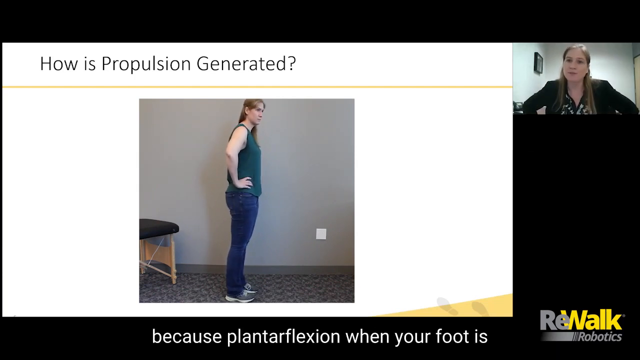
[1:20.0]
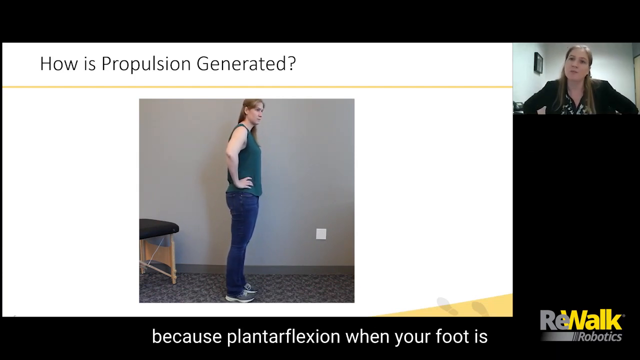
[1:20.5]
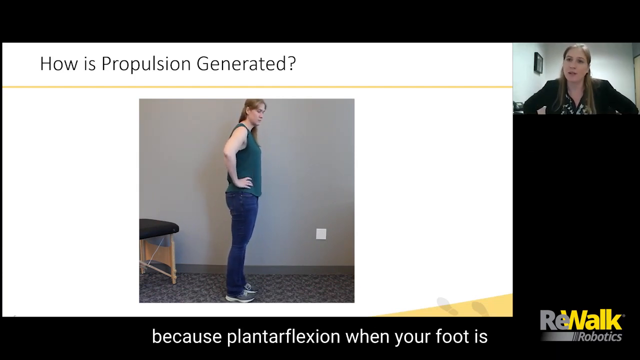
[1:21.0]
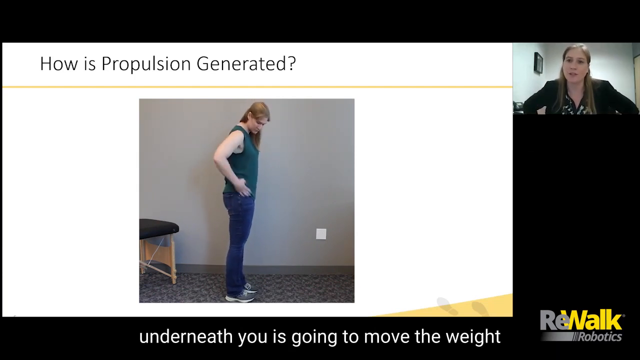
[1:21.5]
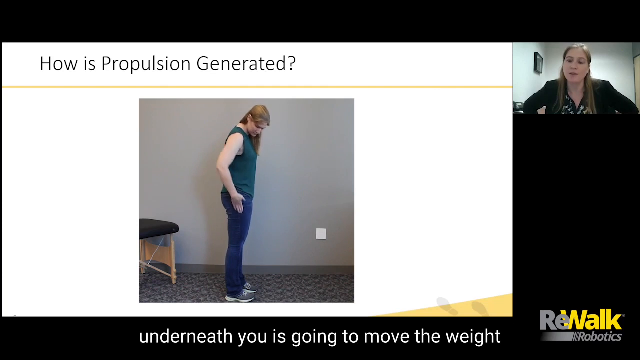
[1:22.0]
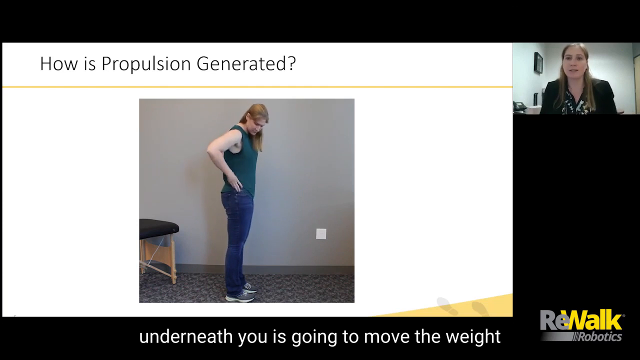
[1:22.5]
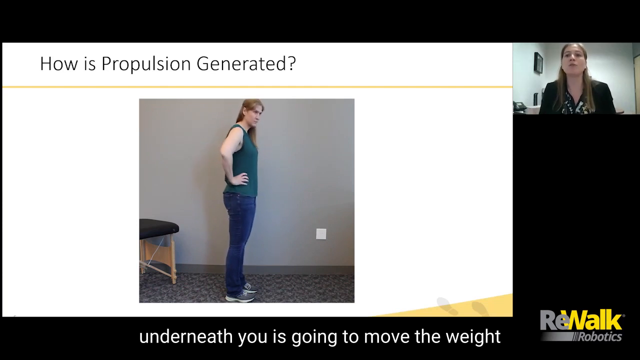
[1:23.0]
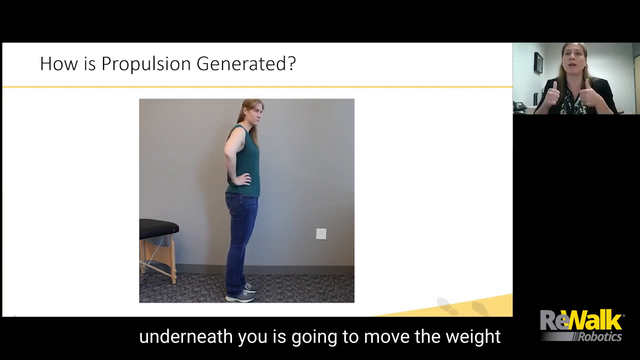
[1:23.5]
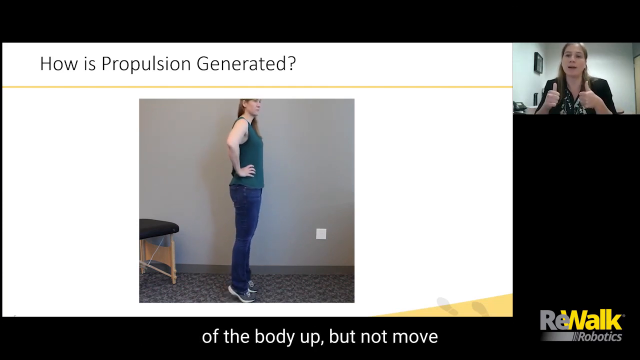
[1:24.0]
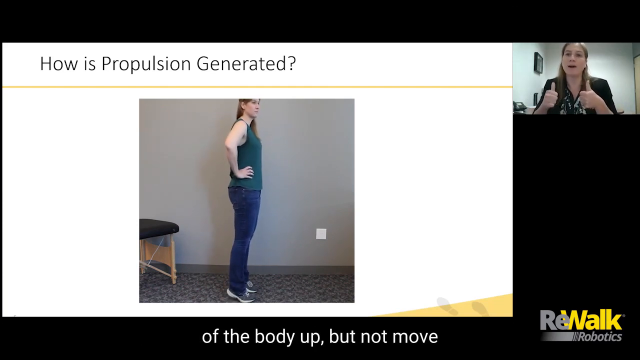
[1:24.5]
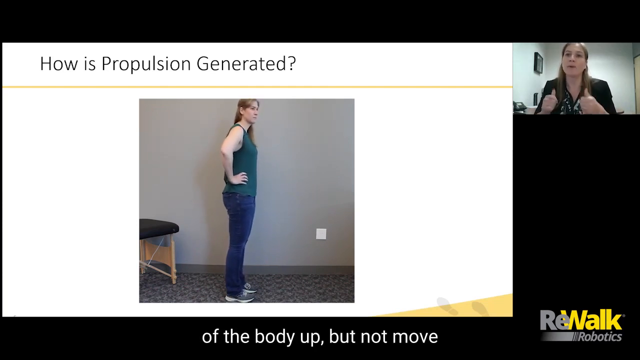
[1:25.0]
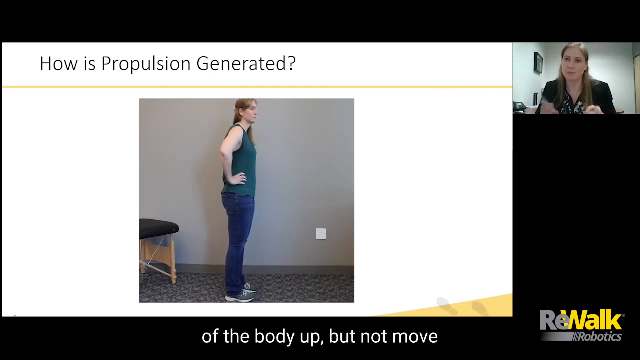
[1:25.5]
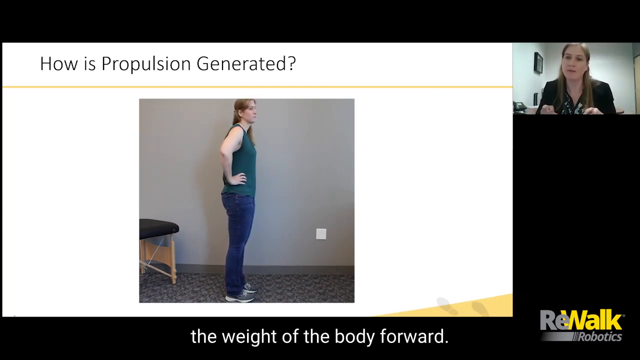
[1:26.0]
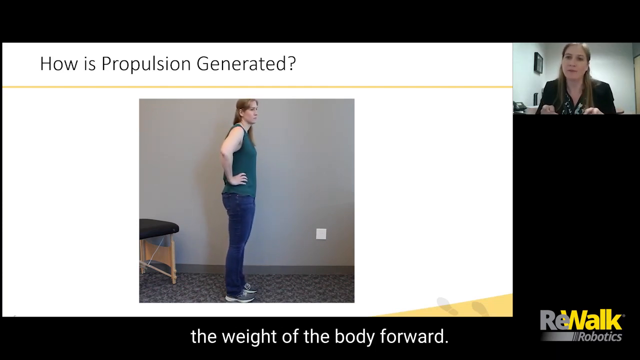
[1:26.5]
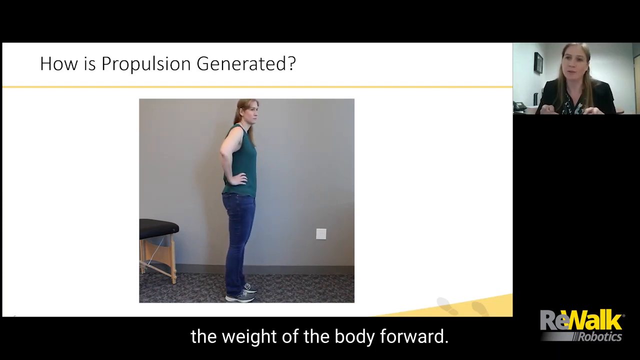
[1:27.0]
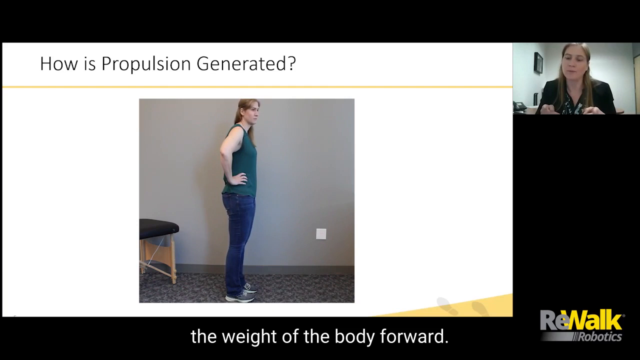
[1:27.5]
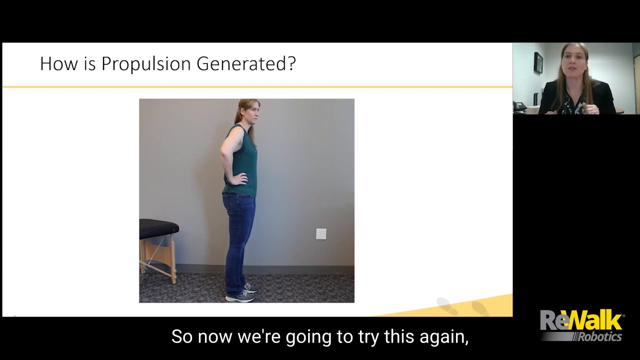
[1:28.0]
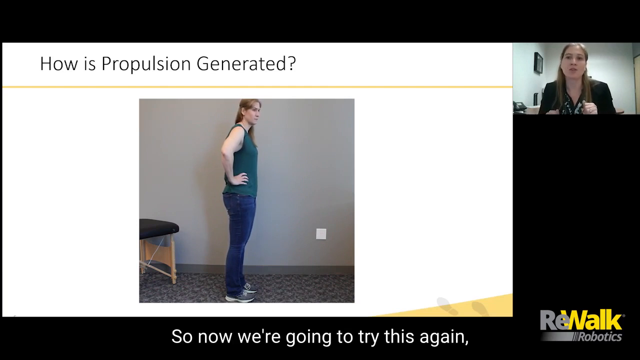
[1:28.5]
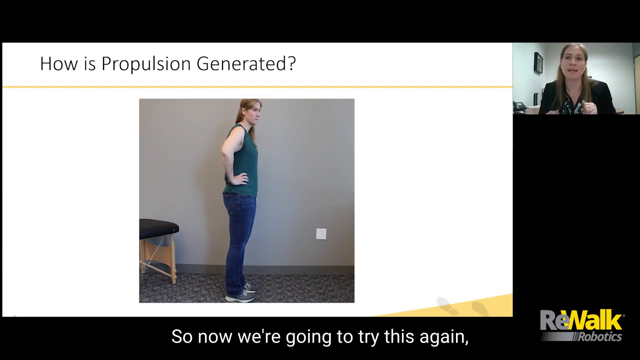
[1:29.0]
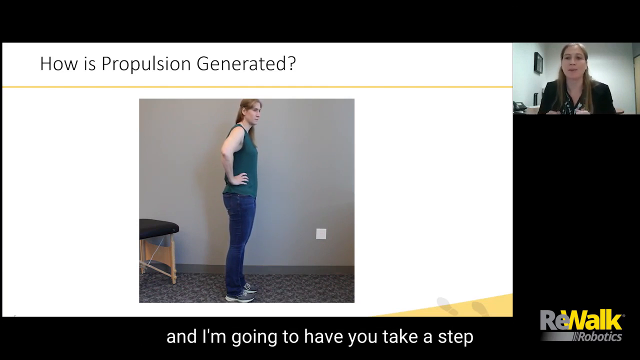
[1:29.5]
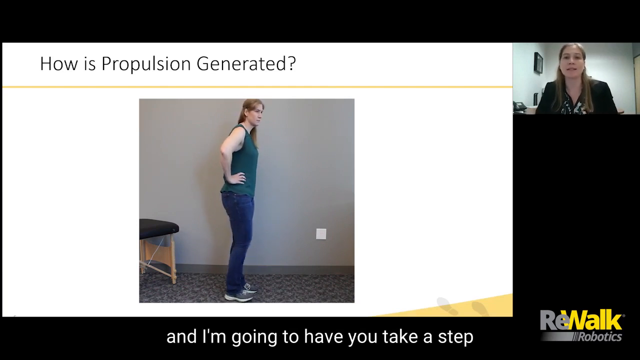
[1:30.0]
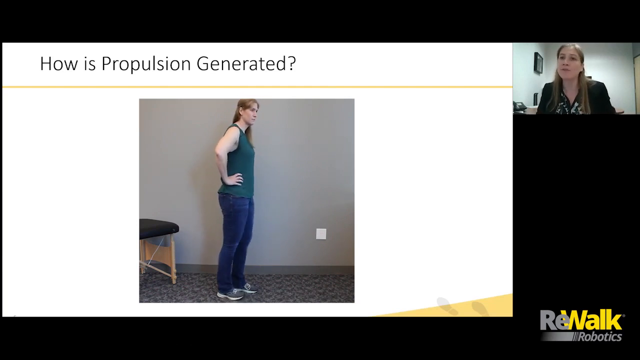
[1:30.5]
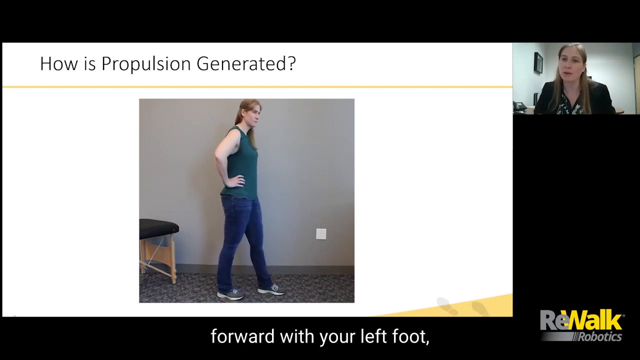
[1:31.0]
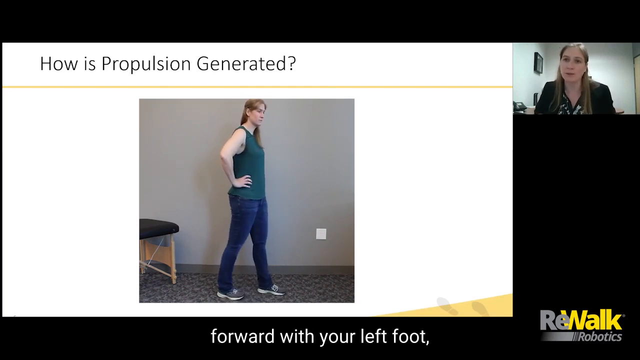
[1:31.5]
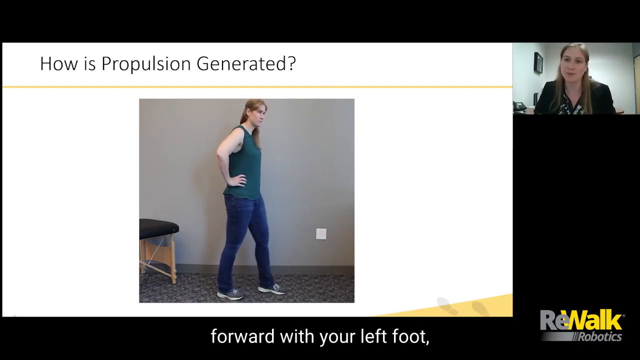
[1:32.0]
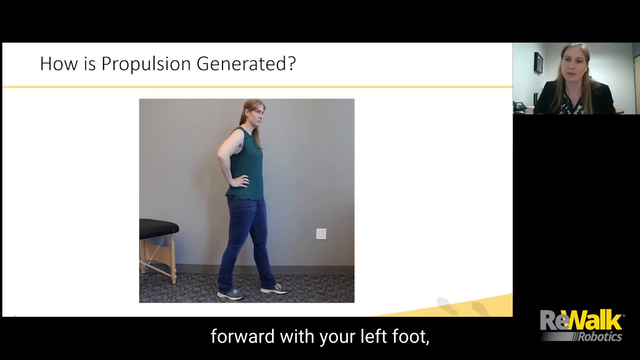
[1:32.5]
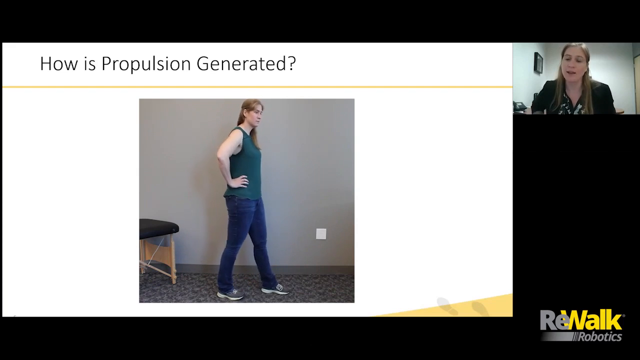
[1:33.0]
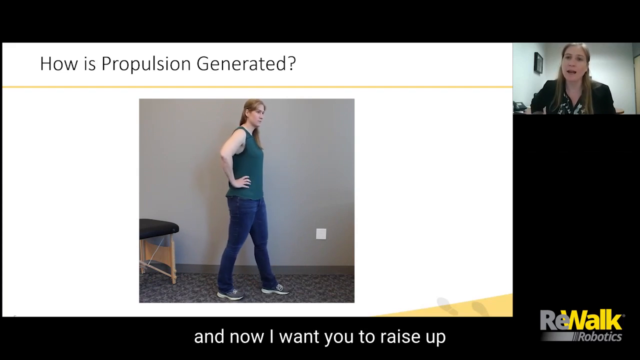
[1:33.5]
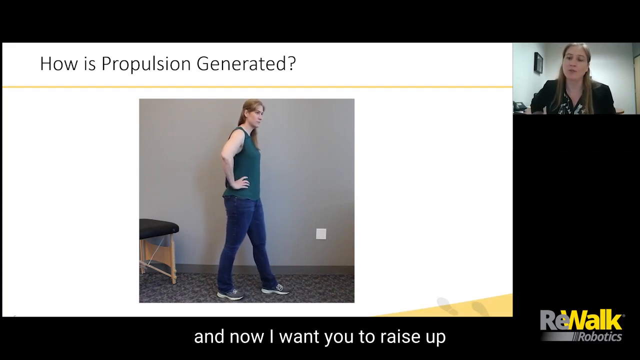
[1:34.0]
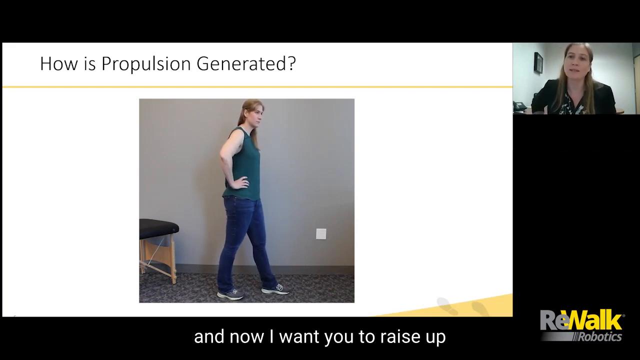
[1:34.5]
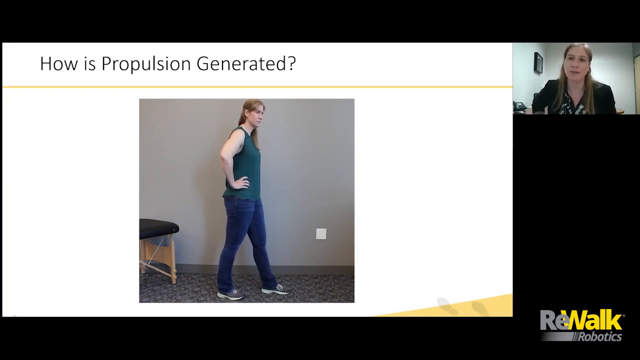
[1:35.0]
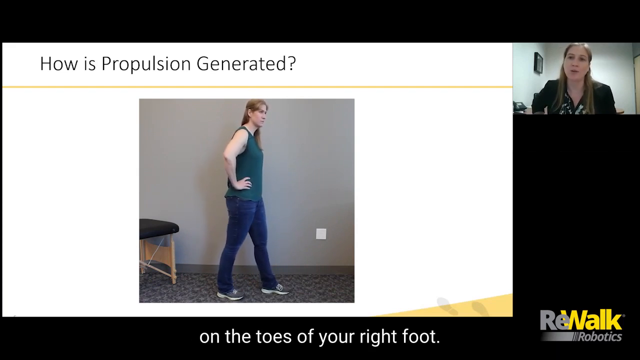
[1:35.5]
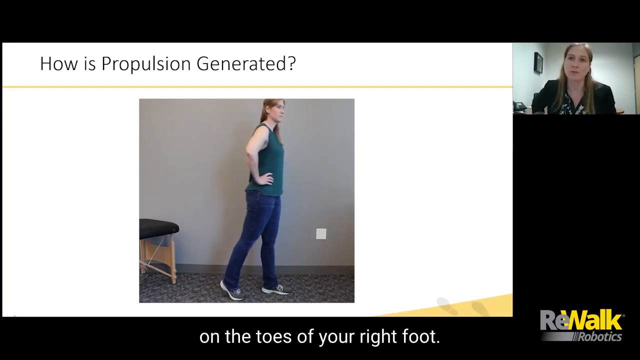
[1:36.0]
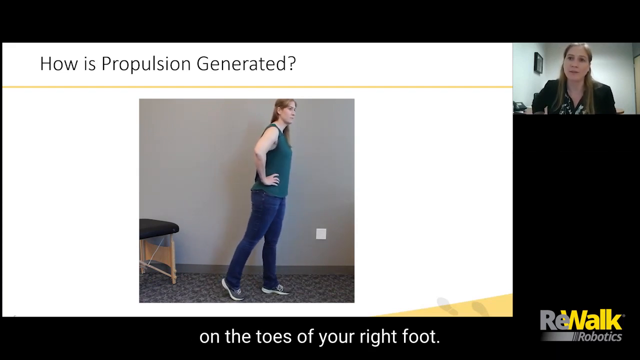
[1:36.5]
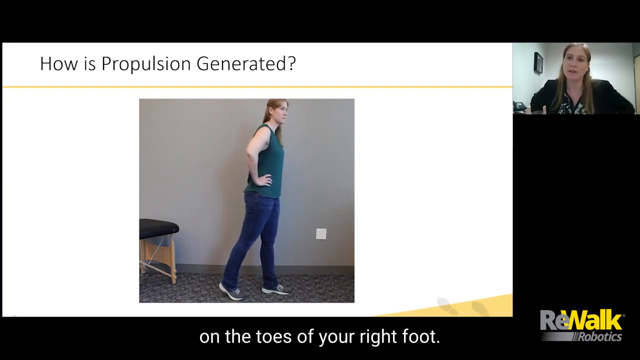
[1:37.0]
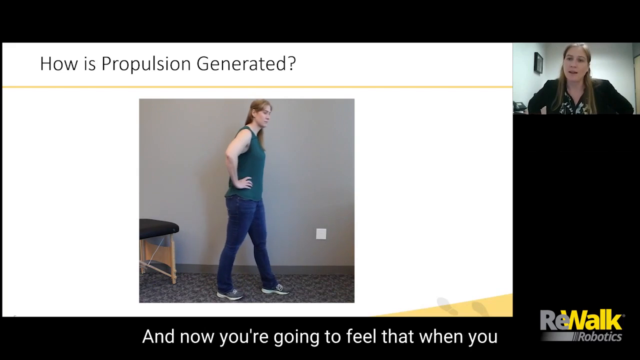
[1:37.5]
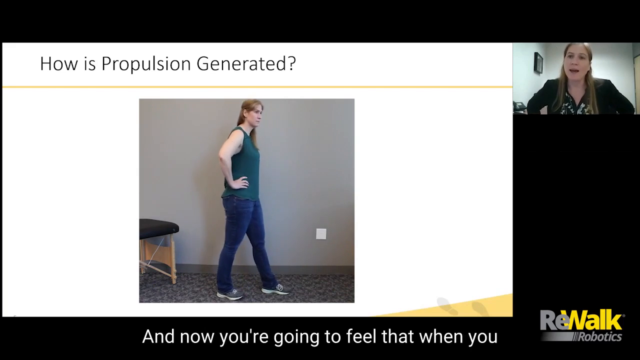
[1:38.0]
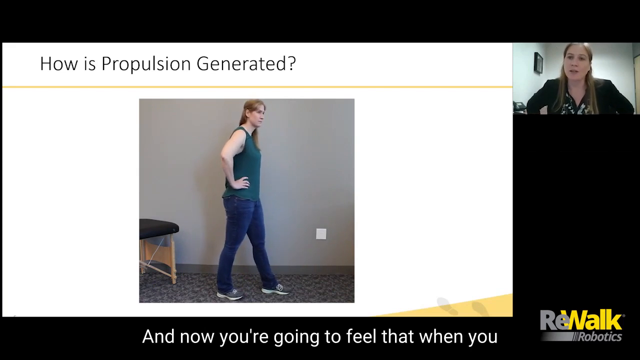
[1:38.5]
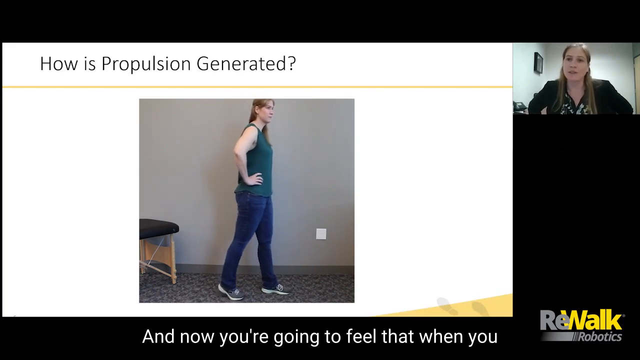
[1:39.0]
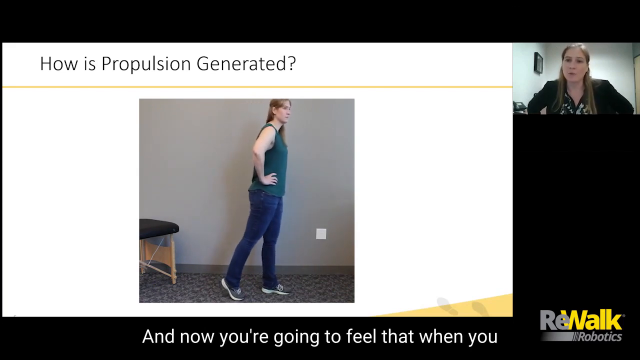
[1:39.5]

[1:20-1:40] The woman appears on the top of the screen, and the presentation is credited to Rewalk Robotics, with the title "how the propulsion is generated." A woman in a circle moves up and down with her hands on her hips. The woman in the center of the frame is the same woman who appears in the video call; she moves her left leg forward, pushes her right leg backwards, and repeats the steps.